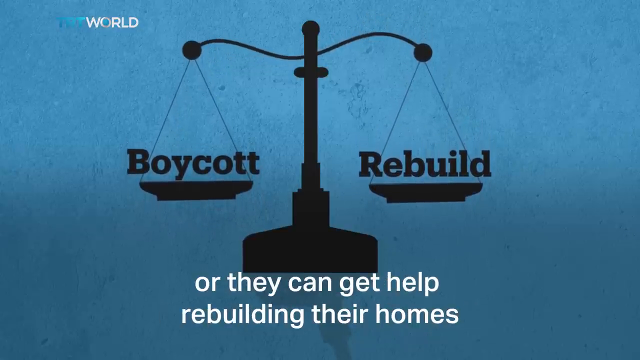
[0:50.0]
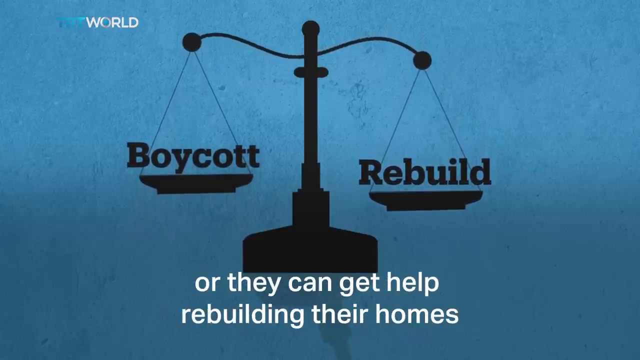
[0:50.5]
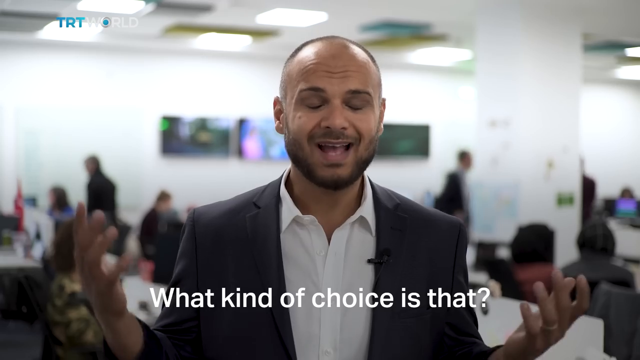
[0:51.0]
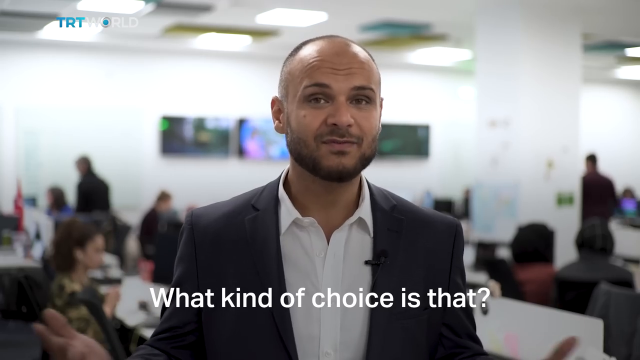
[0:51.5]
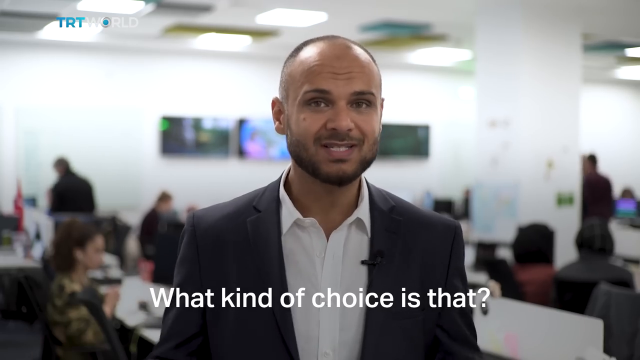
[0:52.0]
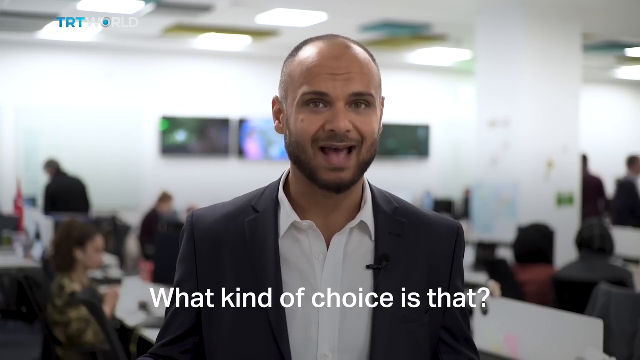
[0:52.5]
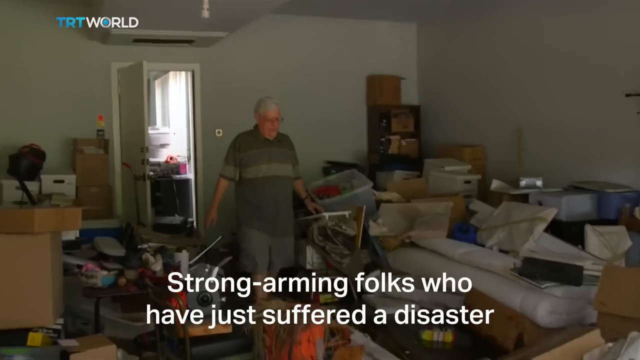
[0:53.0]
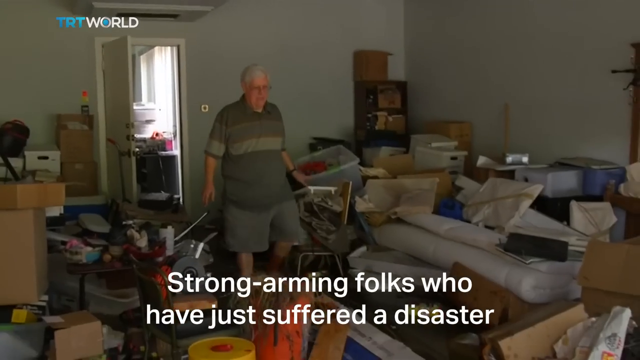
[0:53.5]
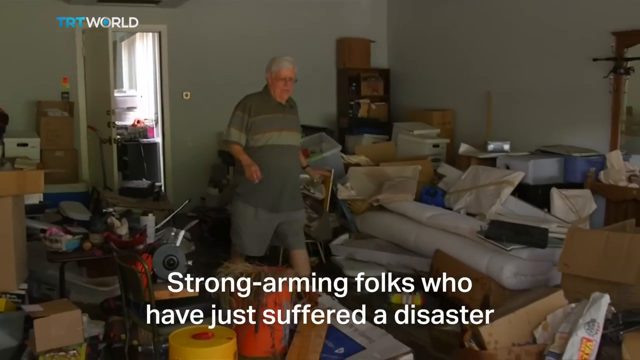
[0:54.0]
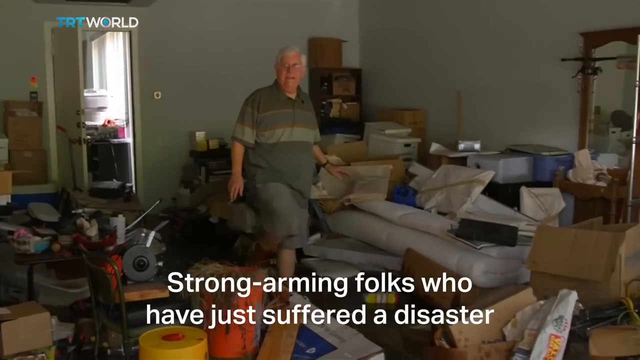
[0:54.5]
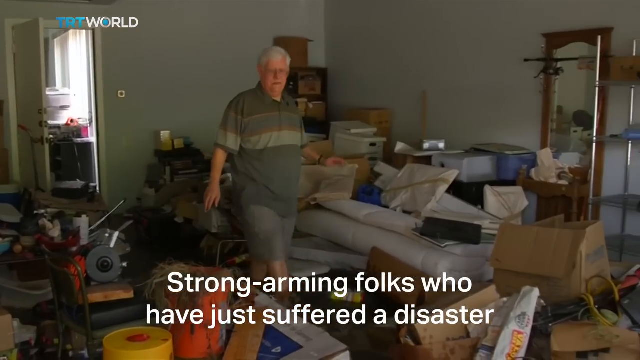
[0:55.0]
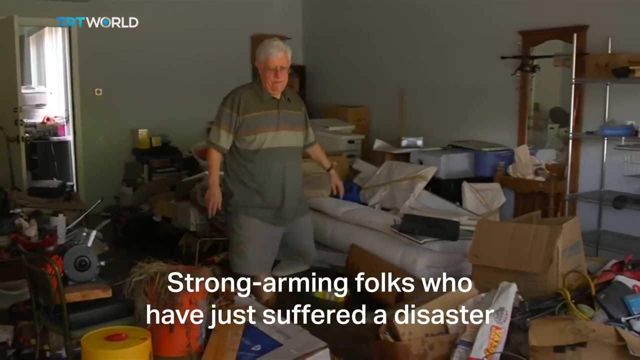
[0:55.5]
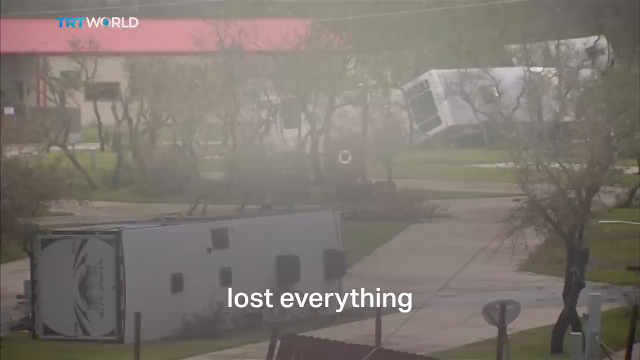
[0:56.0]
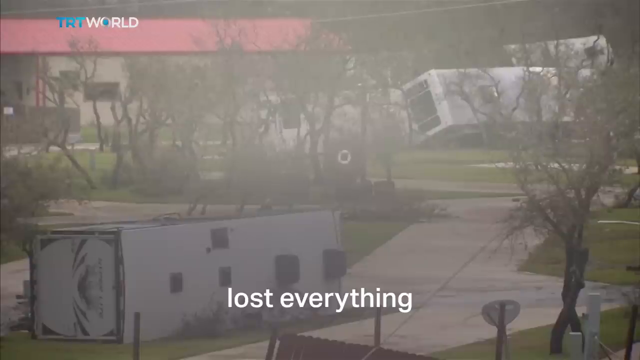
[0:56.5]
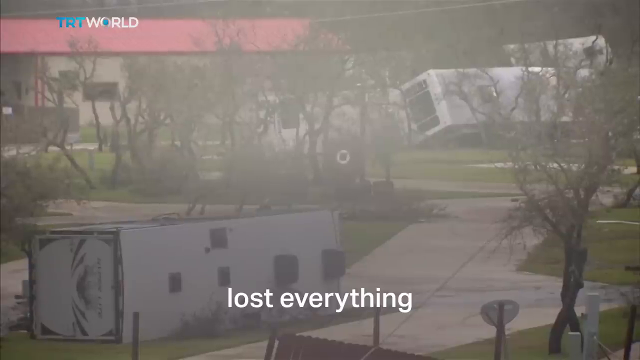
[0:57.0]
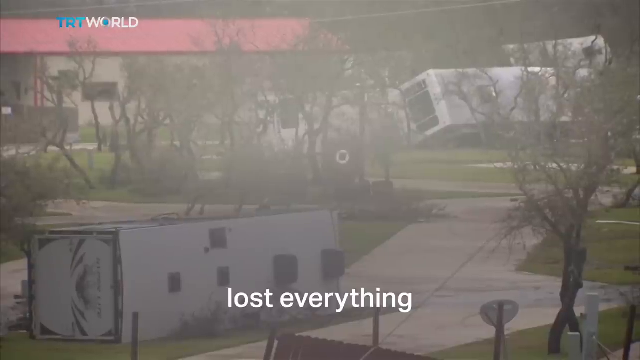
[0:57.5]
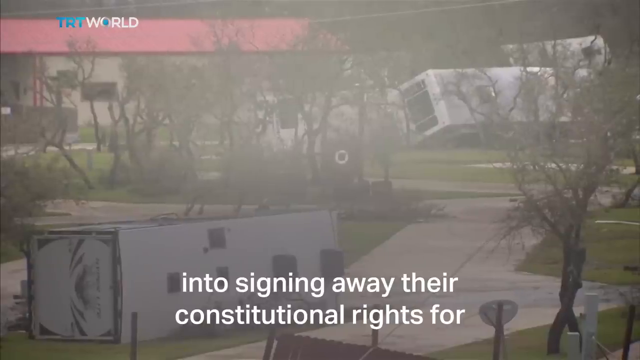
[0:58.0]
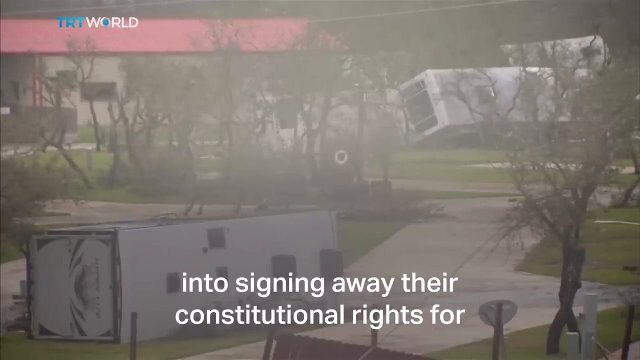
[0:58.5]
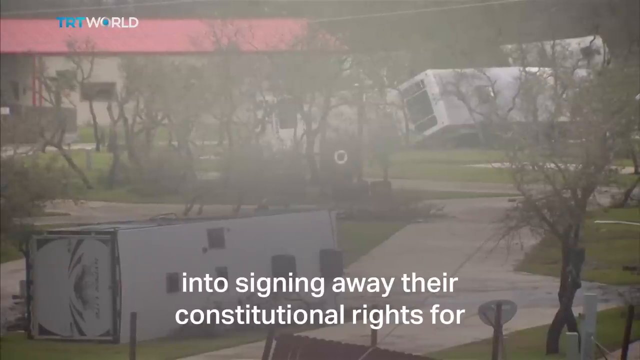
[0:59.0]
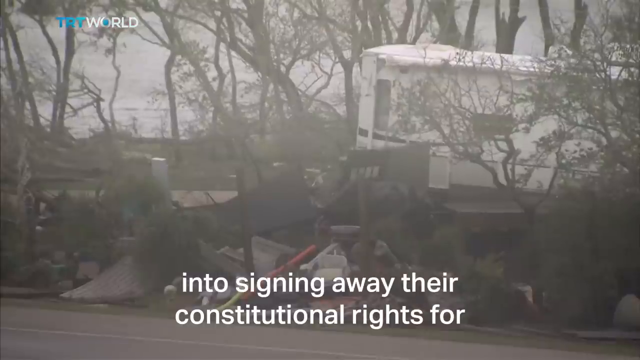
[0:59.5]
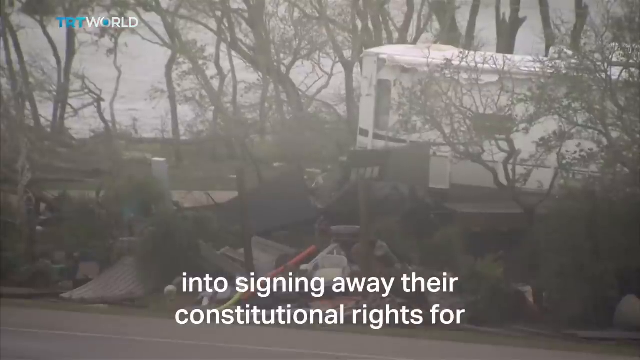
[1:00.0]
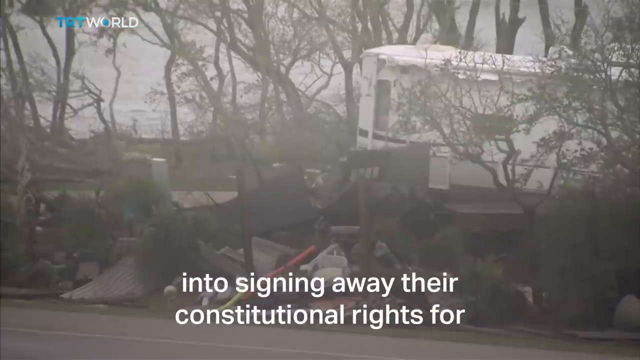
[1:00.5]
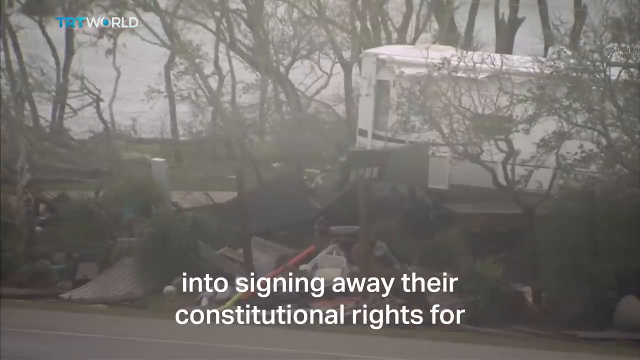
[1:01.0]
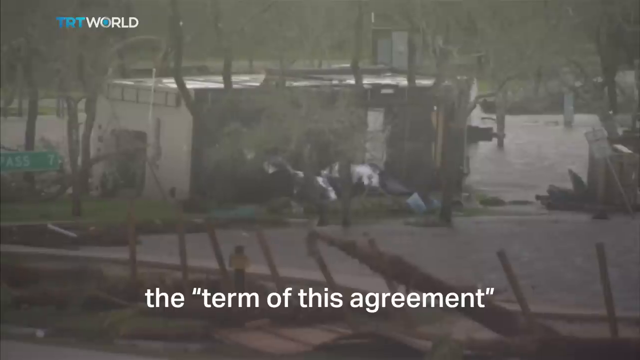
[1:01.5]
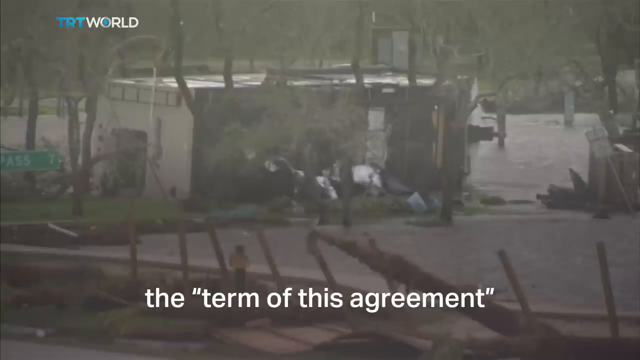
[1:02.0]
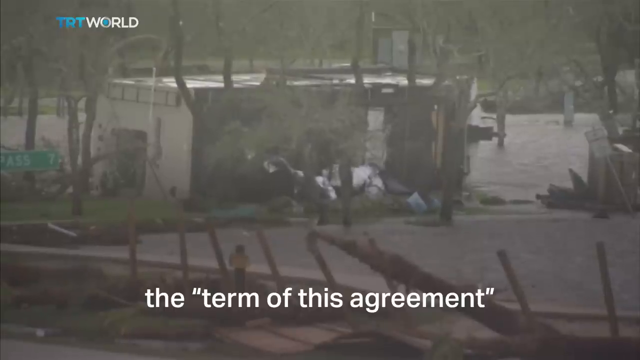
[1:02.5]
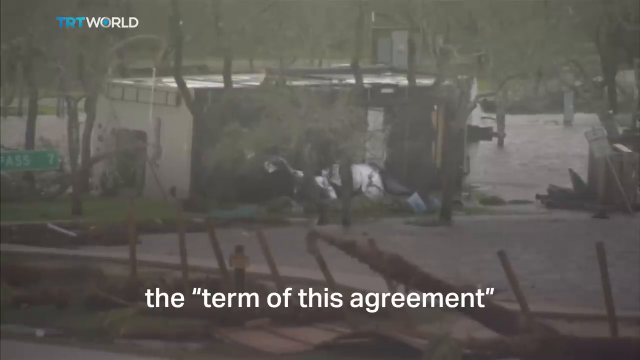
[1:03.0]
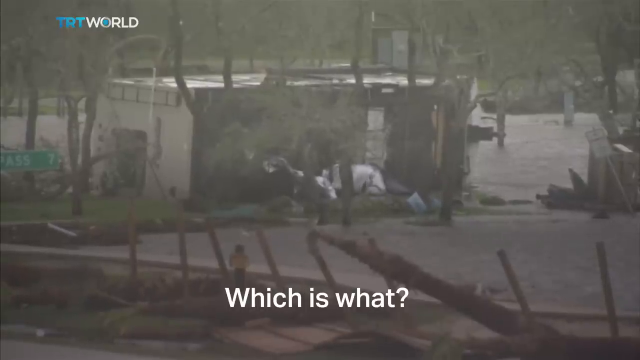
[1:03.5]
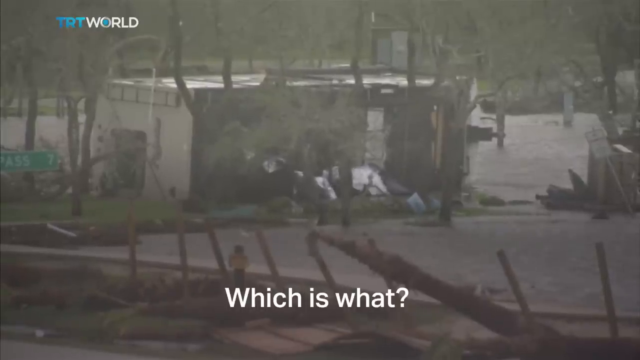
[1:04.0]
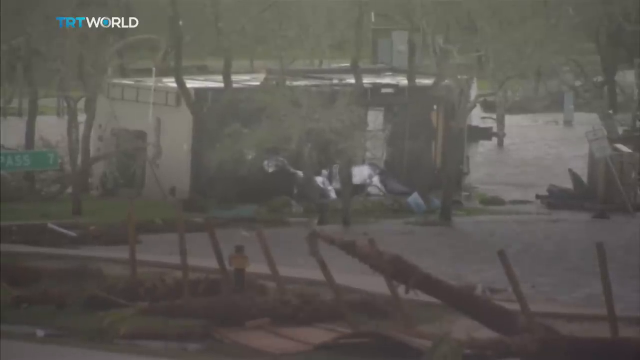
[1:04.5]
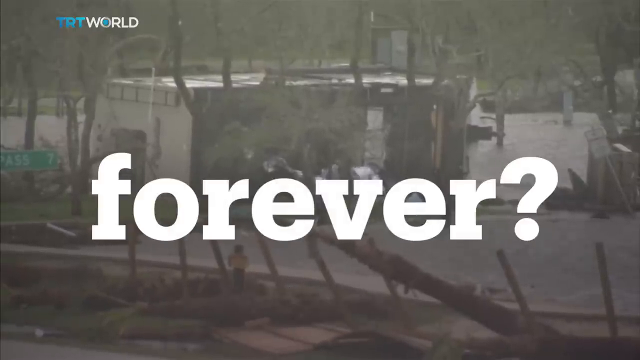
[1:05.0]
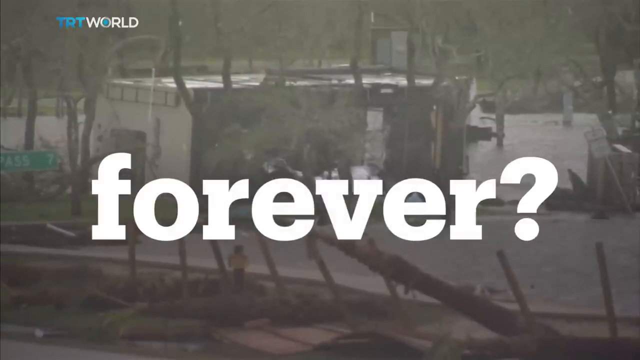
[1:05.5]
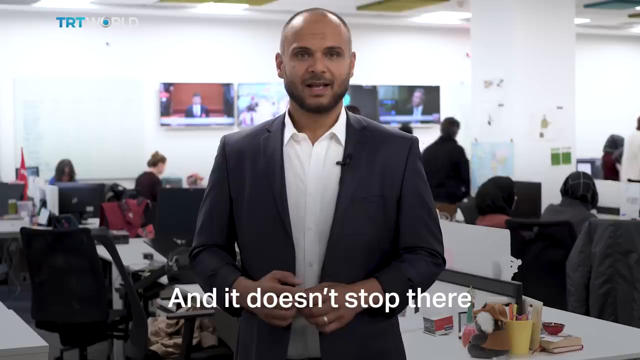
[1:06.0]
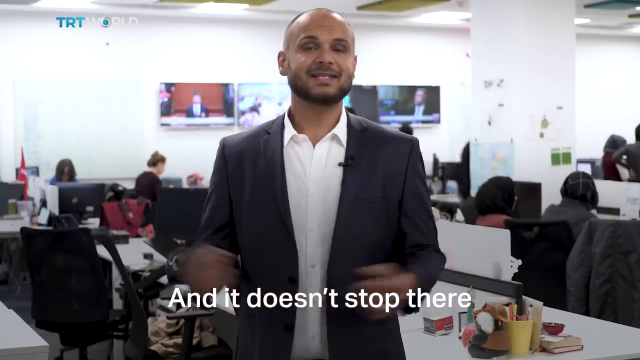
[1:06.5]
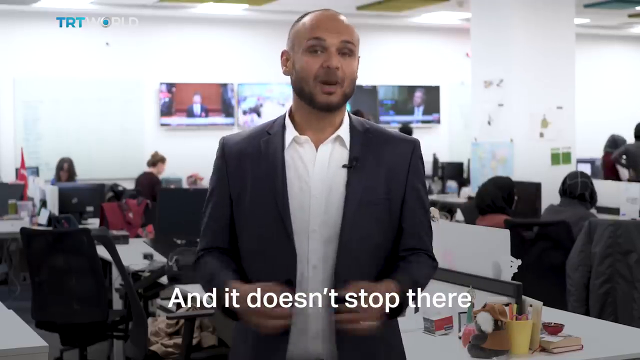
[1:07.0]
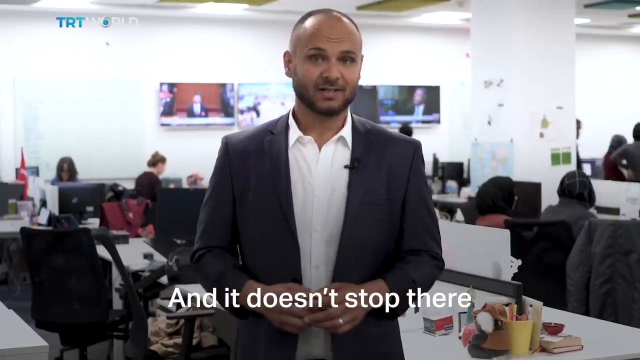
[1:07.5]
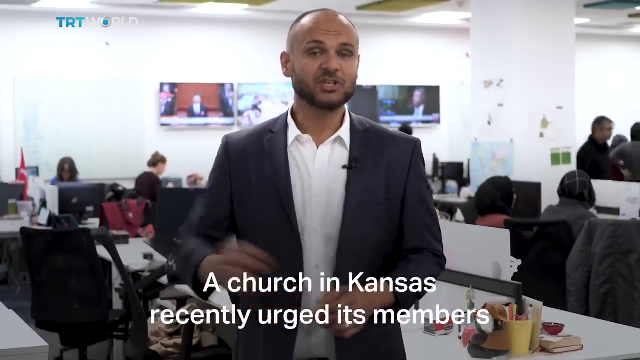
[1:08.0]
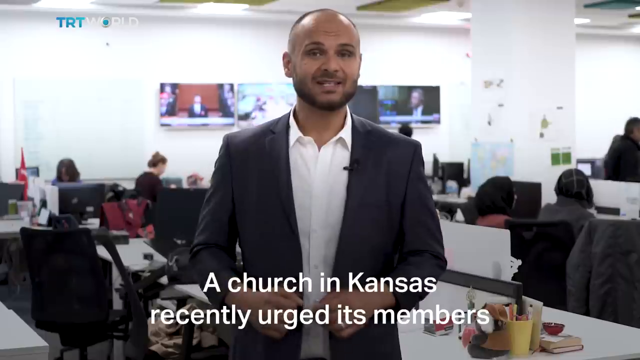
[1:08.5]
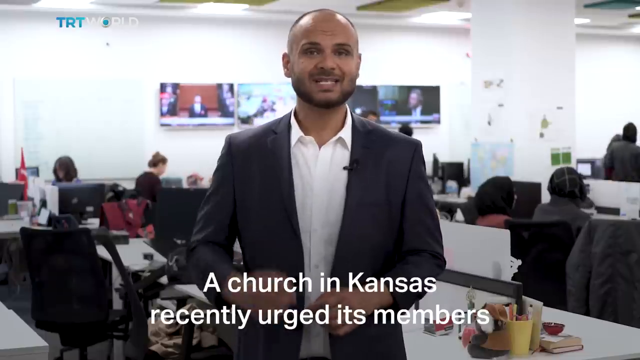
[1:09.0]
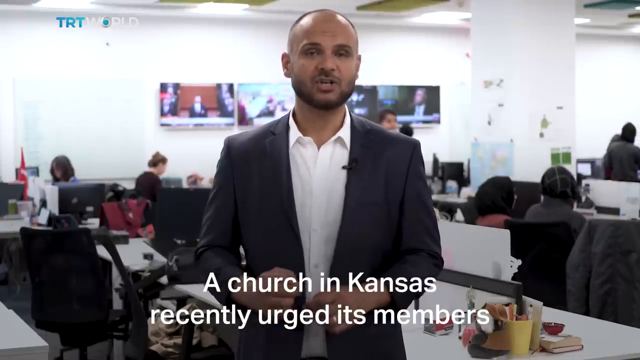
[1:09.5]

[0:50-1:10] Questions from the news anchor are shown: "what kind of choice is that? Strong-arming folks who have just suffered a disaster and lost everything into signing away their constitutional rights for the term of this agreement, which is what? Forever? And it does not stop there. A church in Kansas recently urged its members." Meanwhile, several videos play in the background. The first shows a man's house that seems to be submerged in water as he walks through its rooms, with the water reaching his knees. Outside there is total destruction, with vehicles, including heavy vehicles, that seem to be turned upside down; the hurricane seems to have caused considerable destruction.